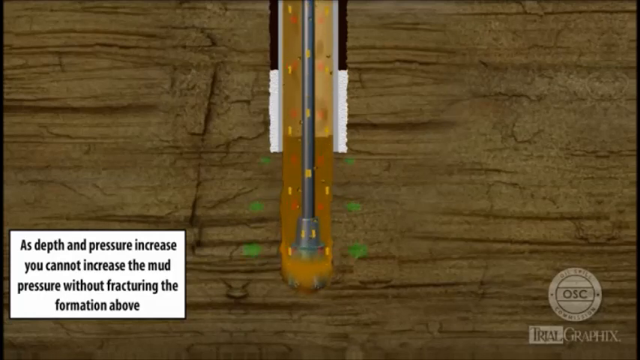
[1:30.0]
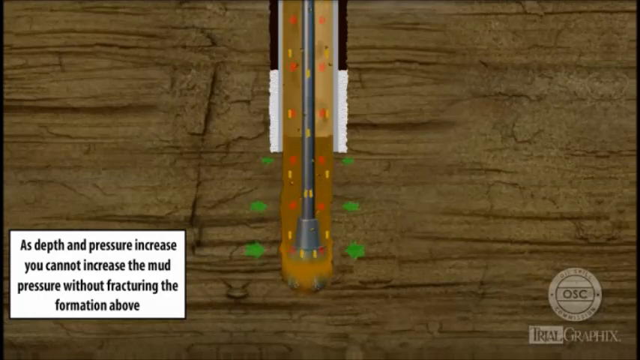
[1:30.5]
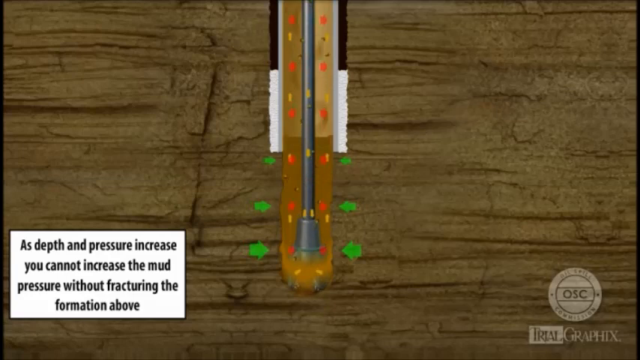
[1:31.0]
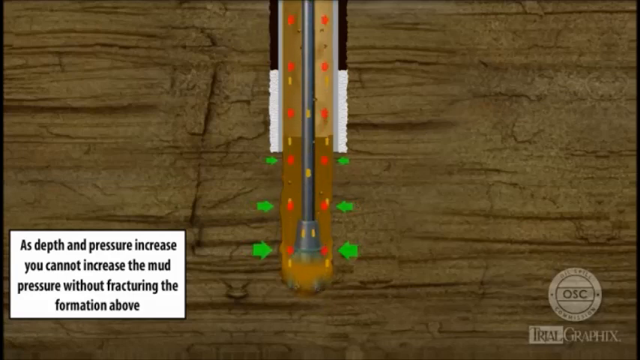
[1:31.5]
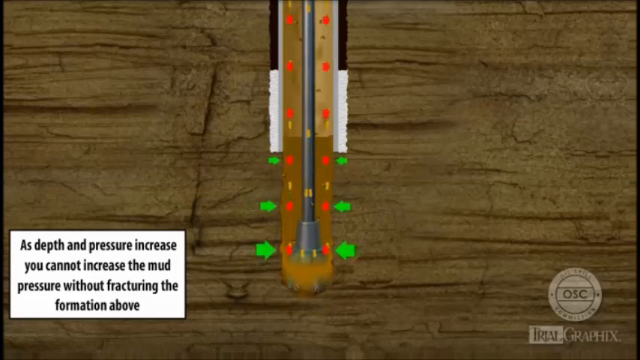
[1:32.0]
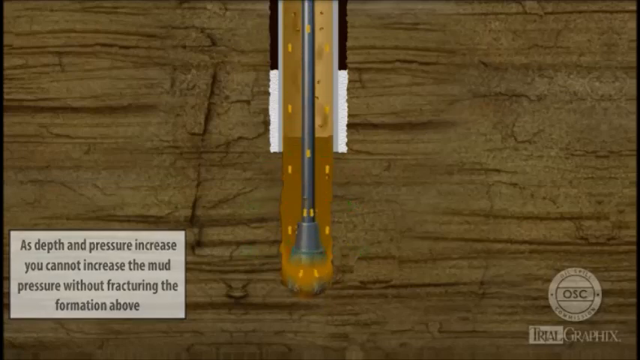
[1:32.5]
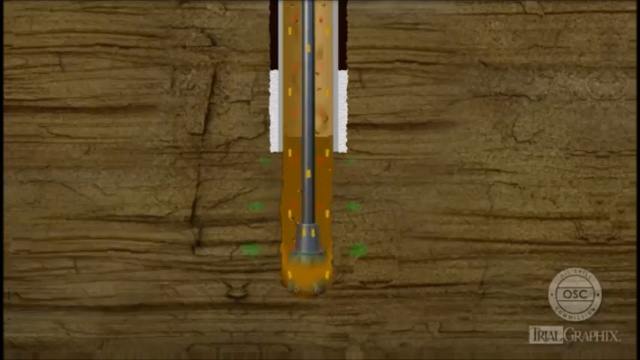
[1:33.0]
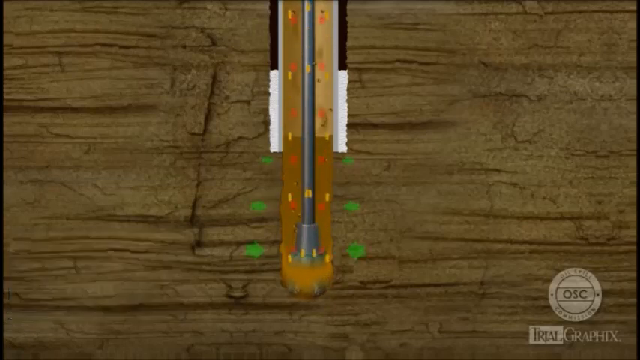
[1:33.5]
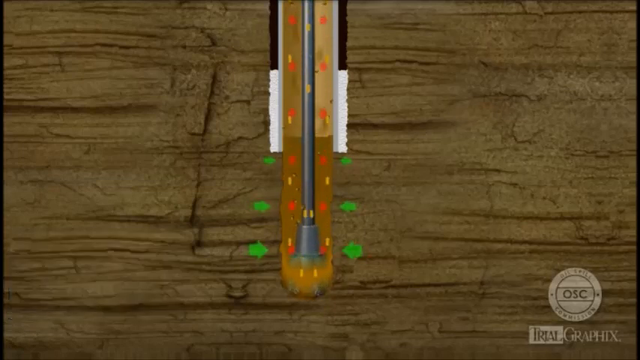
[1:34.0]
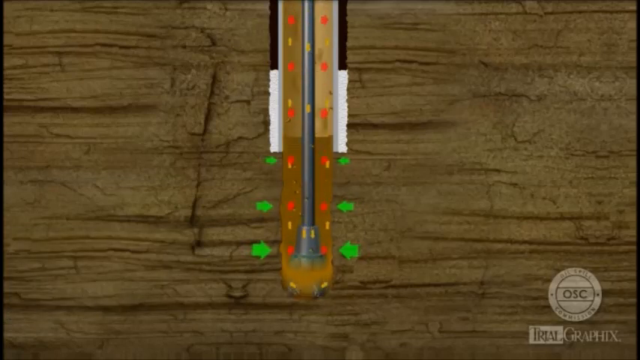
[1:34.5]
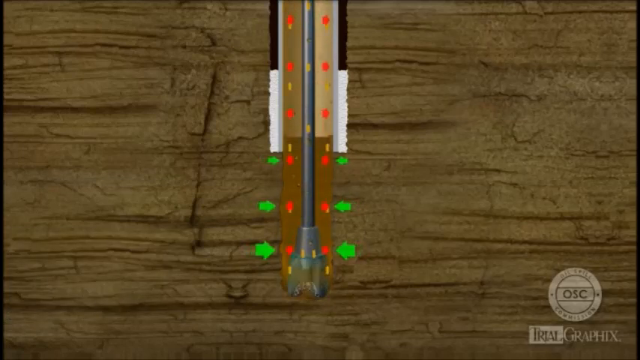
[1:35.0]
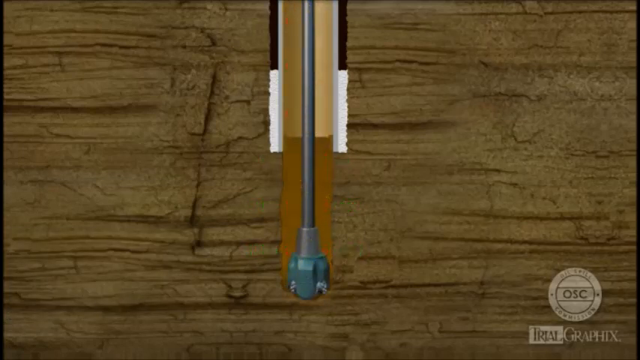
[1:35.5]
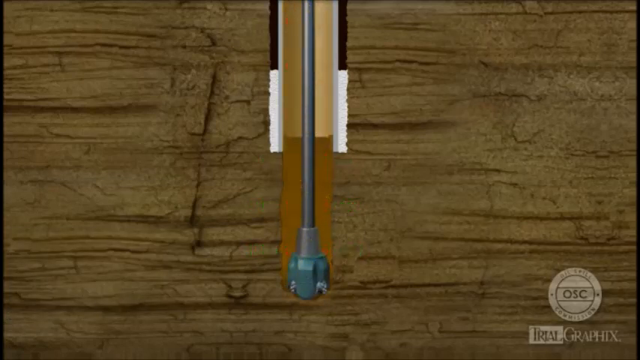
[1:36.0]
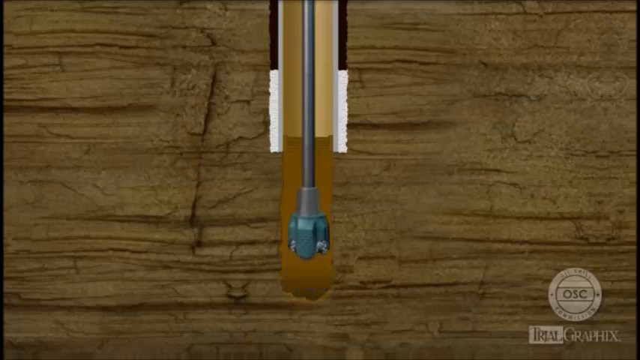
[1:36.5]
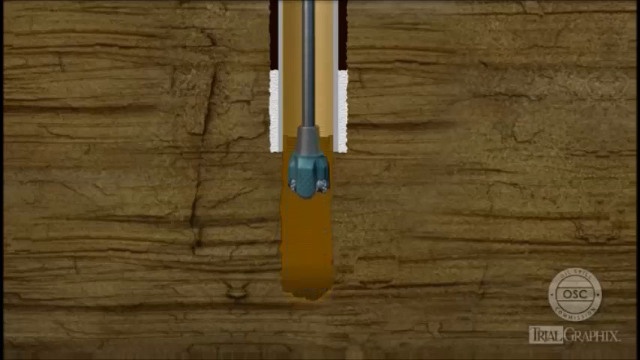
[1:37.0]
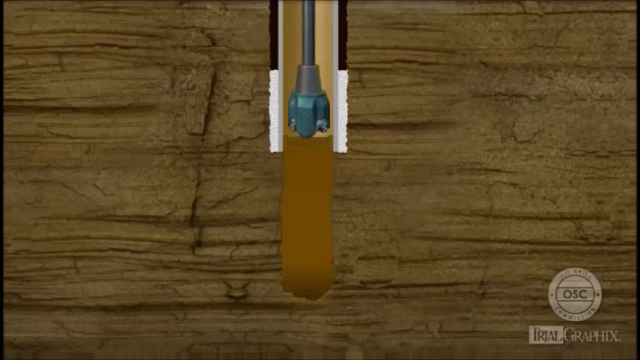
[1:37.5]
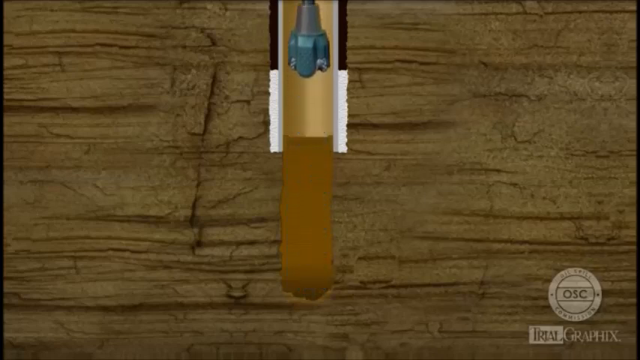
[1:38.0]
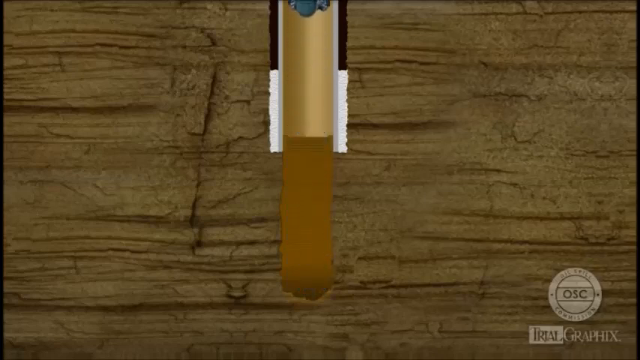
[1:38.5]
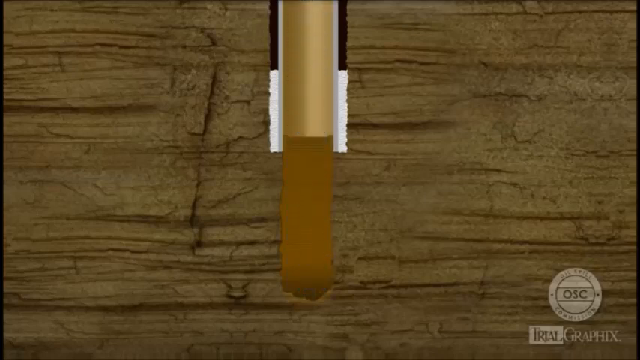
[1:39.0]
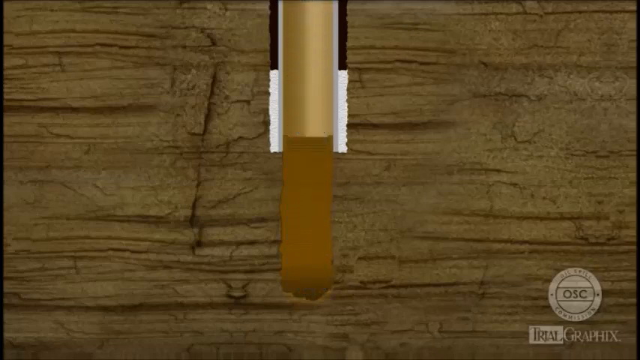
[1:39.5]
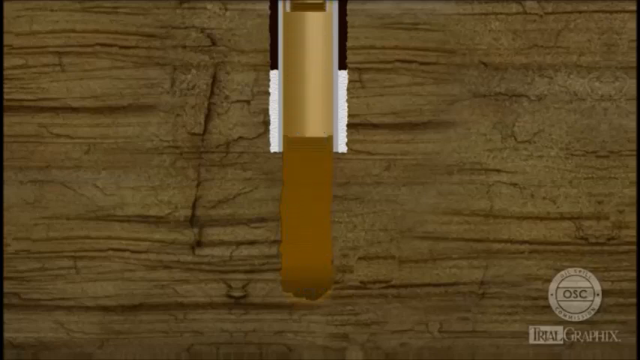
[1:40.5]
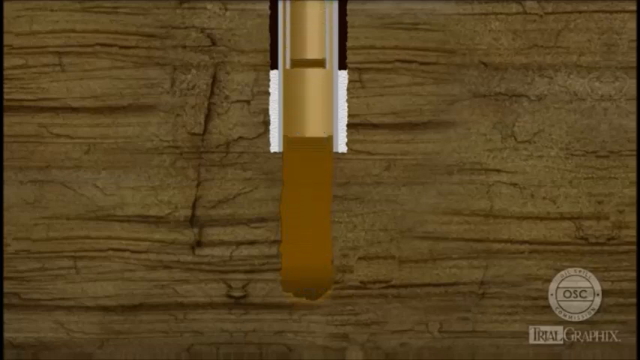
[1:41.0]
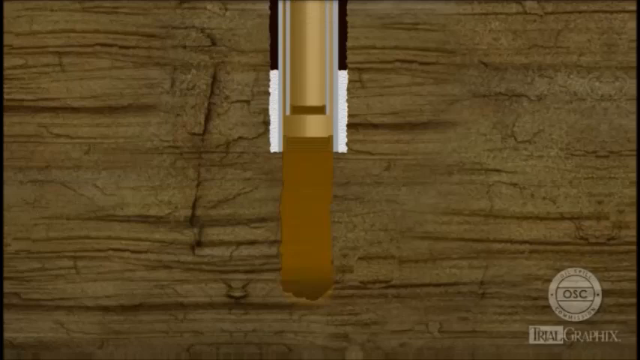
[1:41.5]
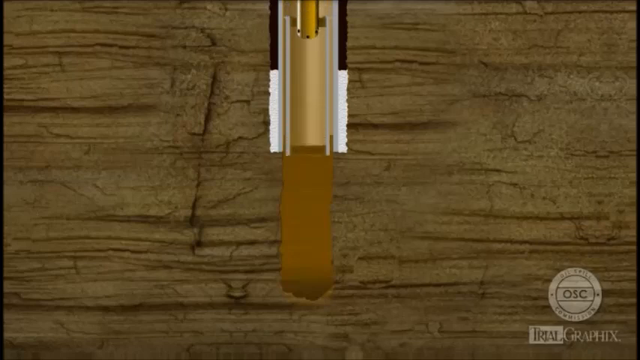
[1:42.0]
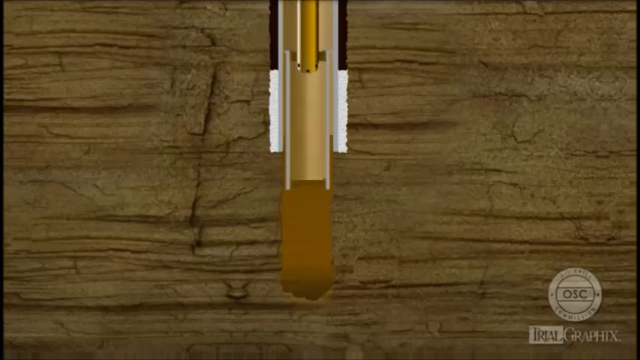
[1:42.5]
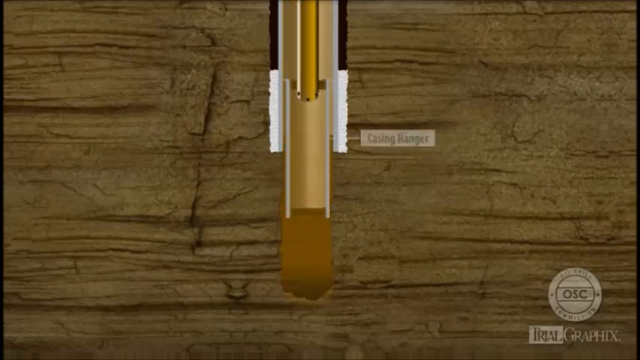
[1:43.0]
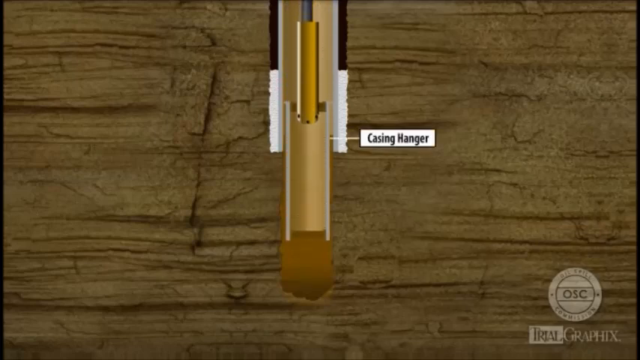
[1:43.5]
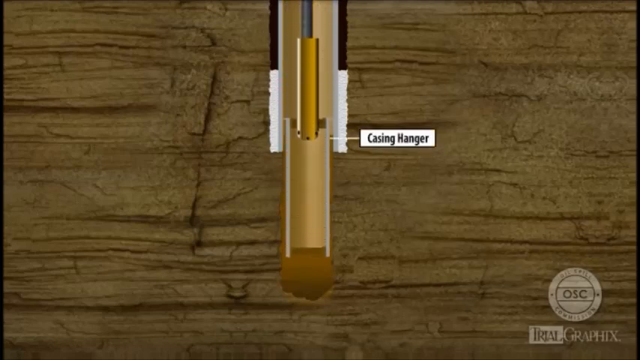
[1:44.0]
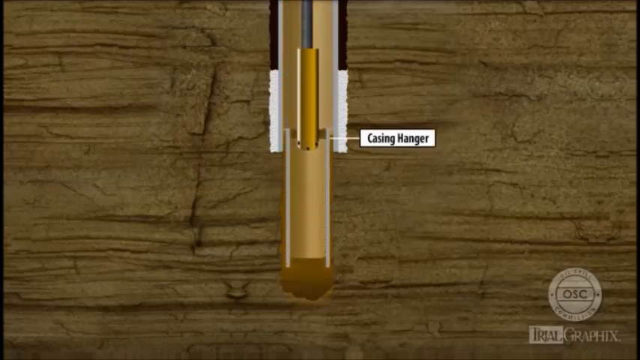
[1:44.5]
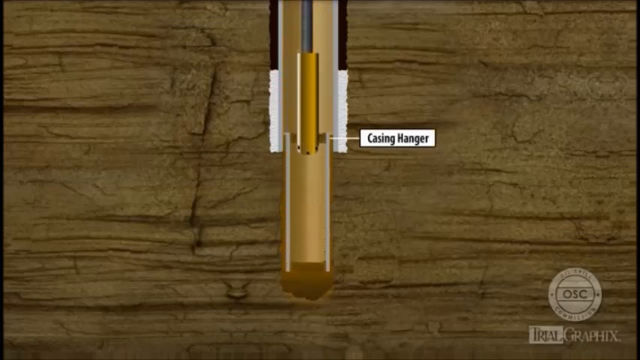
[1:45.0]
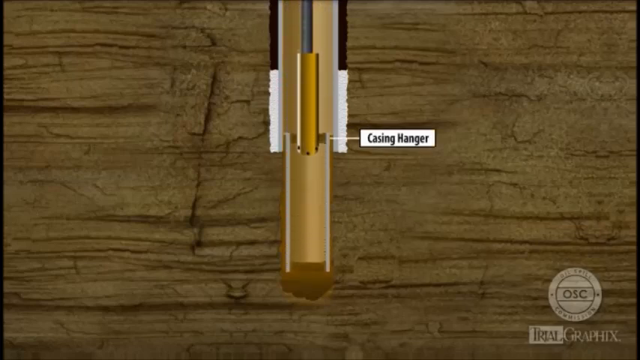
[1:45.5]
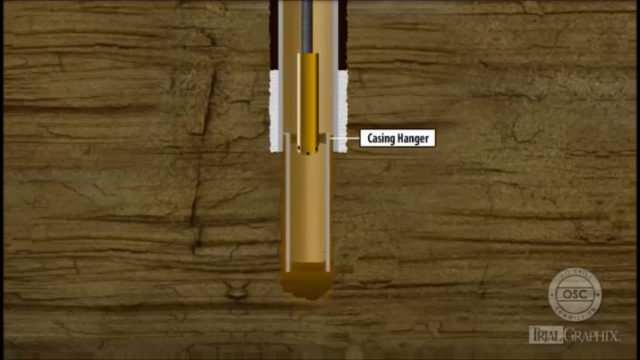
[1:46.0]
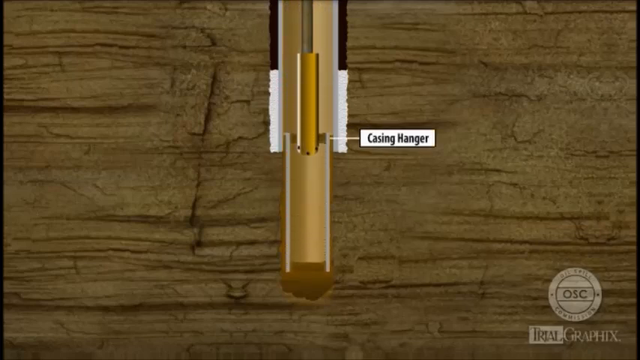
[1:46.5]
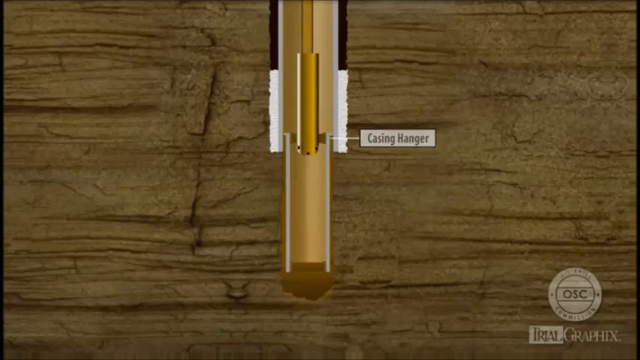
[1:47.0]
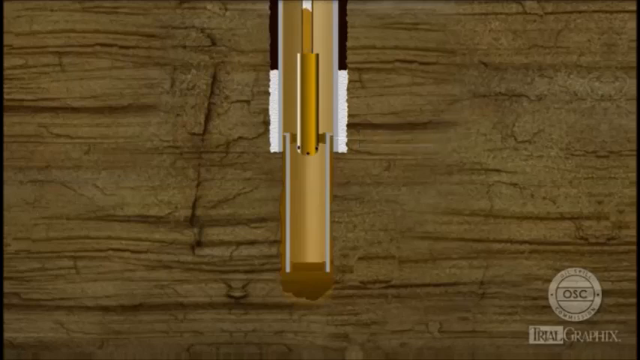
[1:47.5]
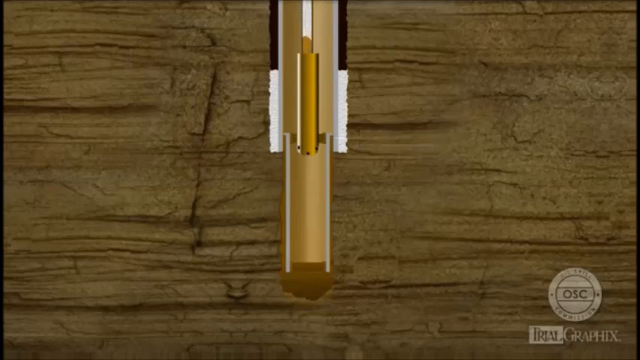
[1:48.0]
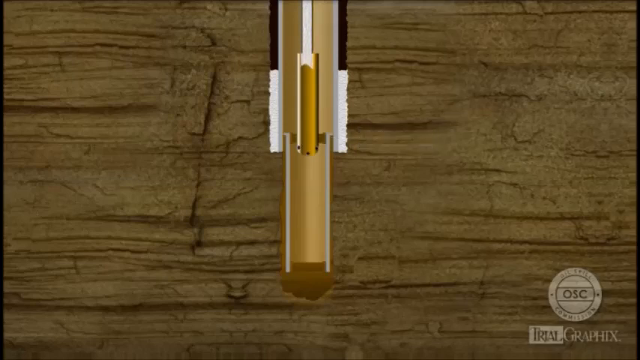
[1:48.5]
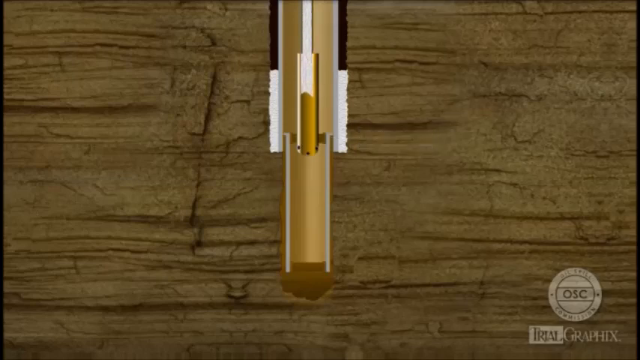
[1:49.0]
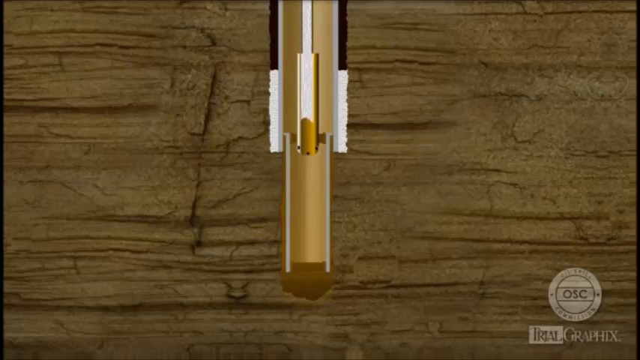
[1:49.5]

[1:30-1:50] The drill continues moving further down the block of wood. The words "as depth and pressure increase, you cannot increase the mud pressure without fracturing the formation above" appear in black font within a rectangular white box toward the left of the screen. At the bottom there are six green arrows, two large and four small, pointing toward the drill, and particles flow upward. The drill then slowly moves up the way it came and out of frame, revealing two colors where it was: the bottom half is deep brown and the top half is brown-beige. As the drill leaves the hole, another tool moves into where it was. To the right of this tool are the words "casting hanger" in small black font within a rectangular white box, and some sort of substance flows down into it.